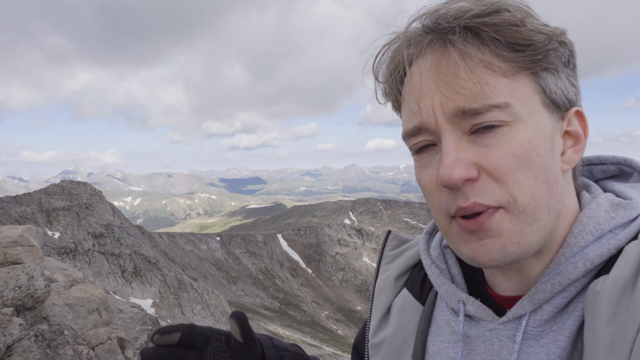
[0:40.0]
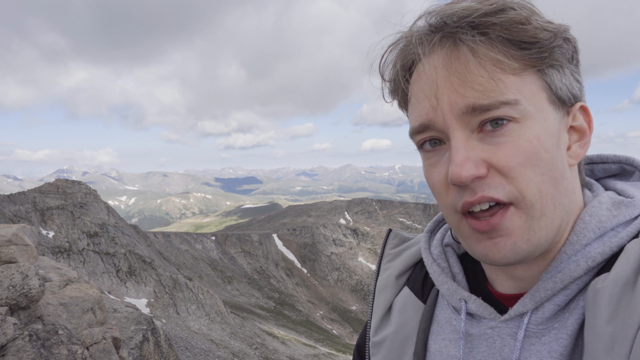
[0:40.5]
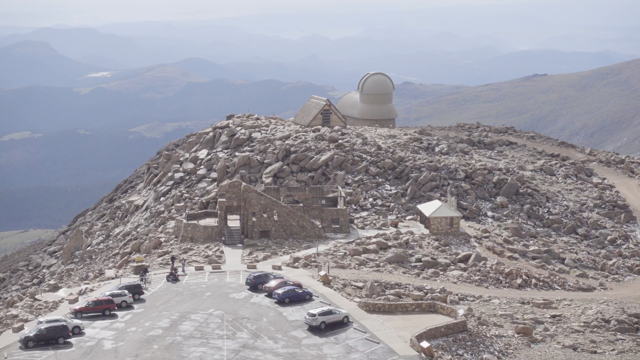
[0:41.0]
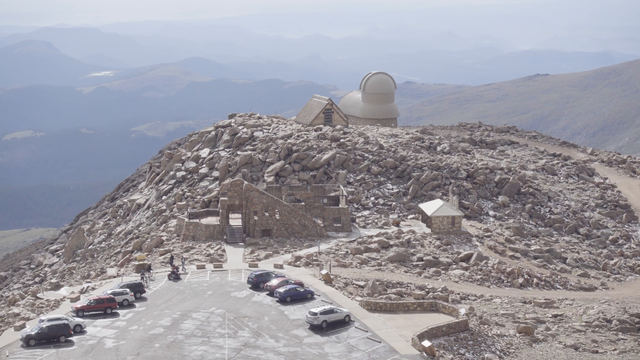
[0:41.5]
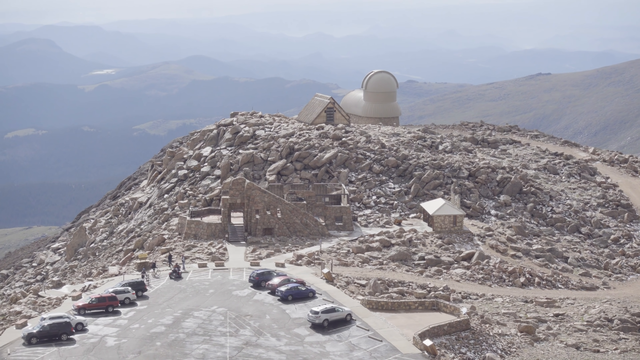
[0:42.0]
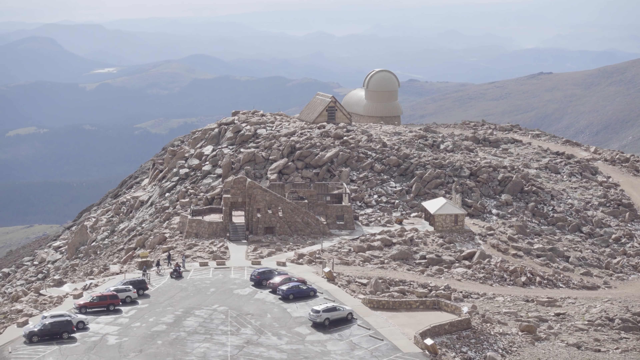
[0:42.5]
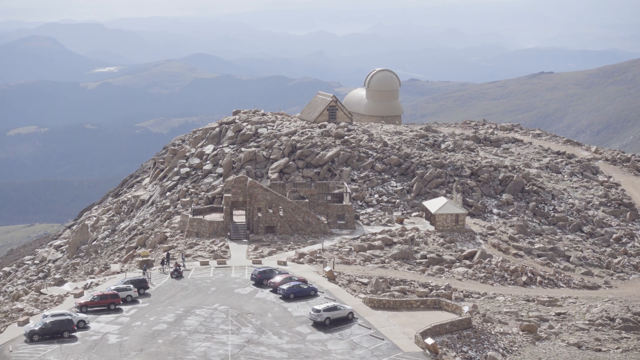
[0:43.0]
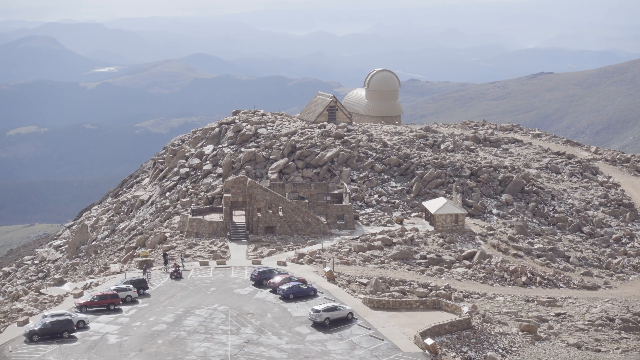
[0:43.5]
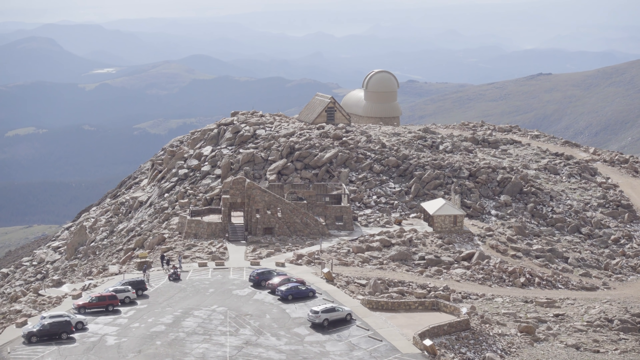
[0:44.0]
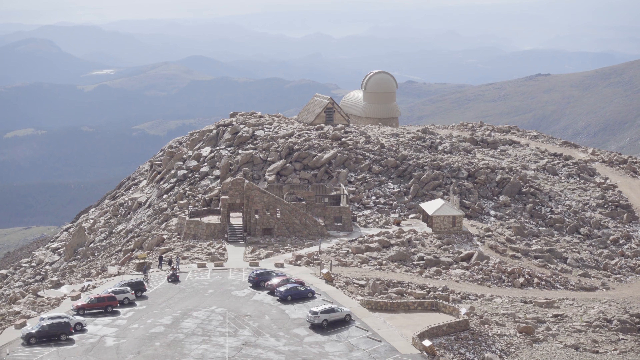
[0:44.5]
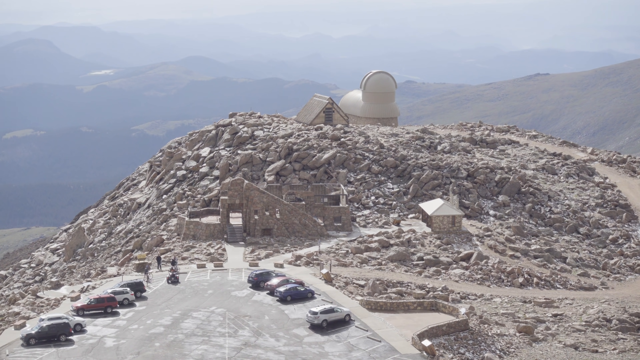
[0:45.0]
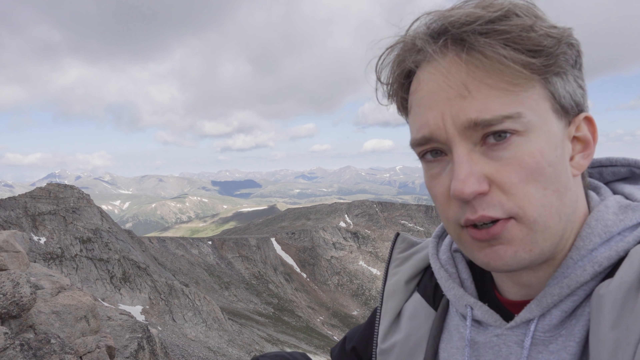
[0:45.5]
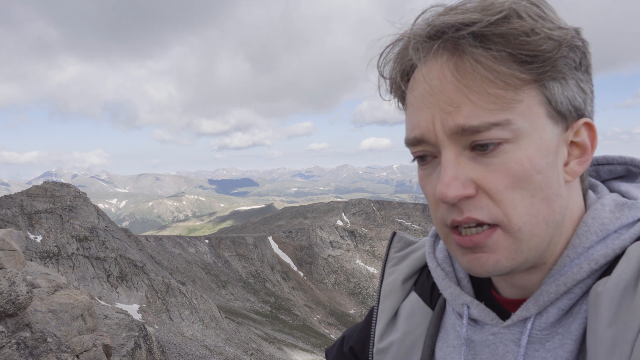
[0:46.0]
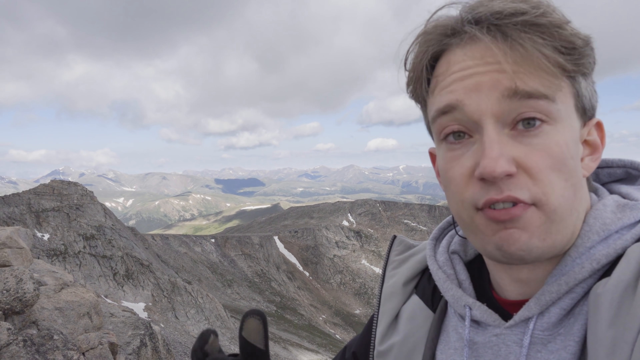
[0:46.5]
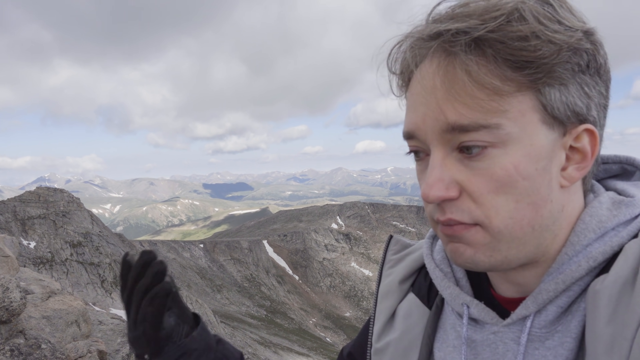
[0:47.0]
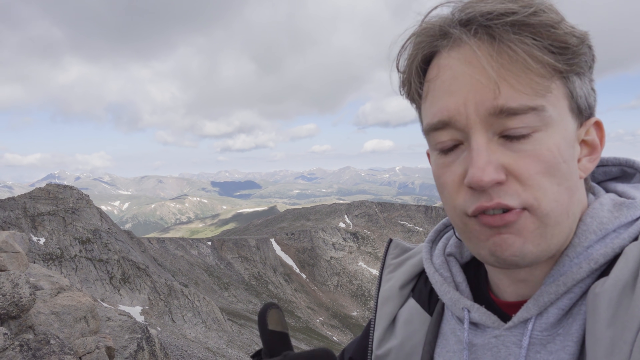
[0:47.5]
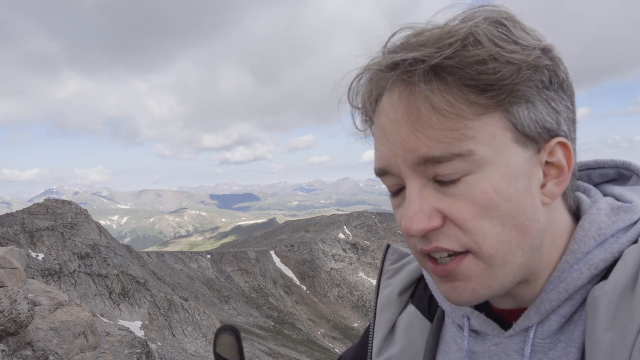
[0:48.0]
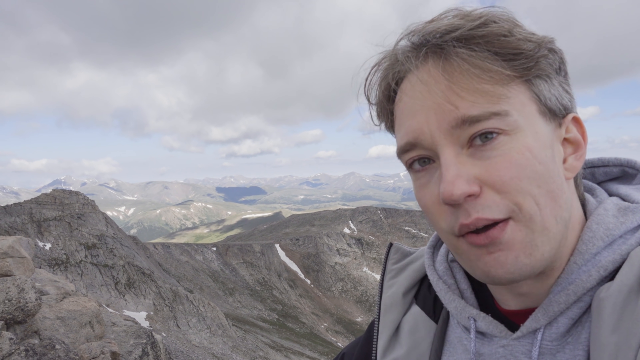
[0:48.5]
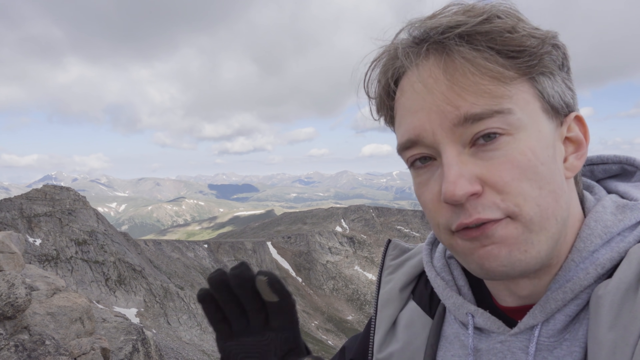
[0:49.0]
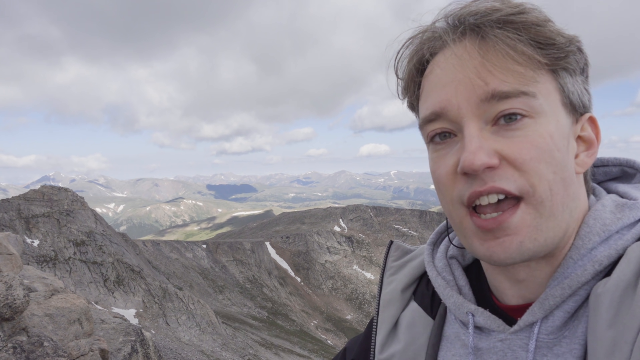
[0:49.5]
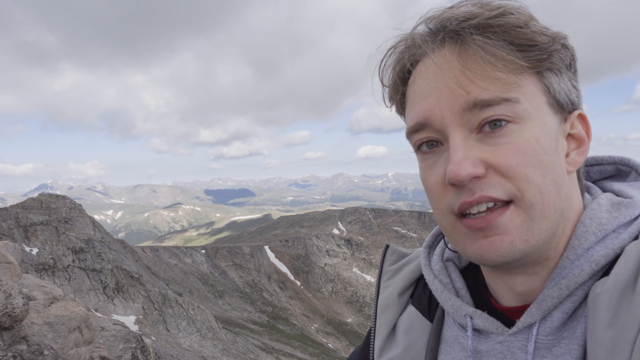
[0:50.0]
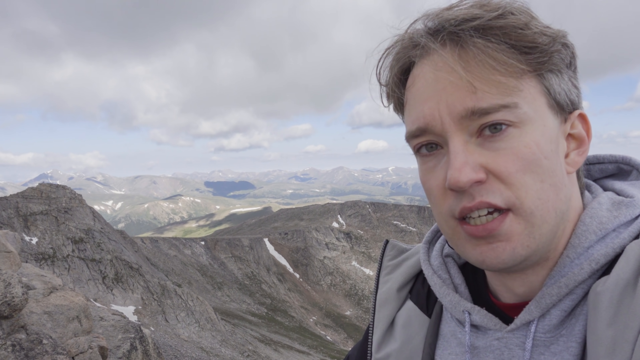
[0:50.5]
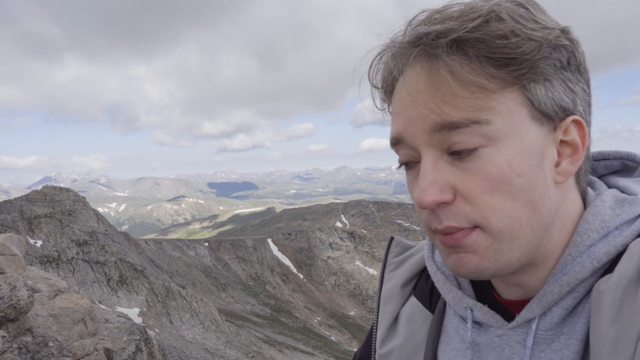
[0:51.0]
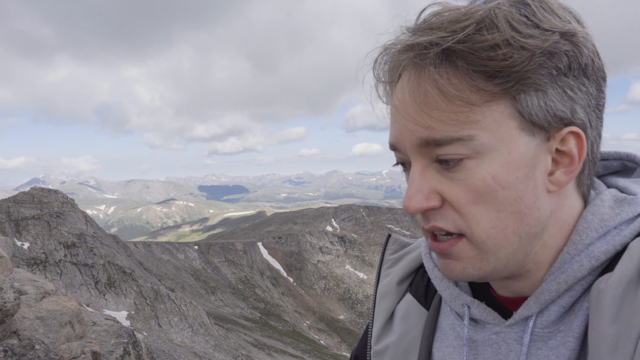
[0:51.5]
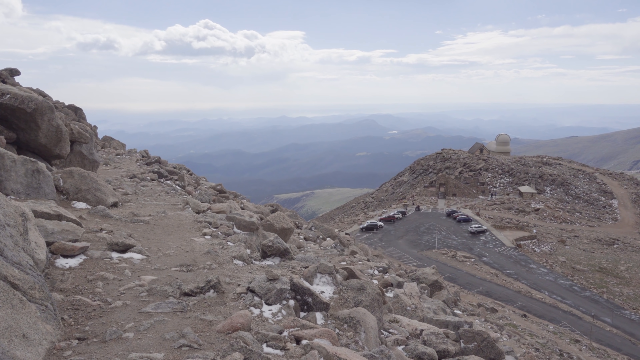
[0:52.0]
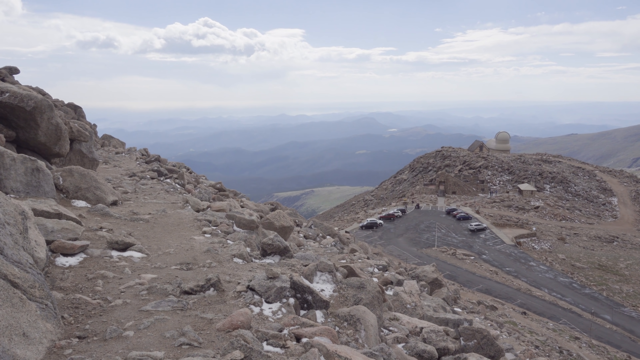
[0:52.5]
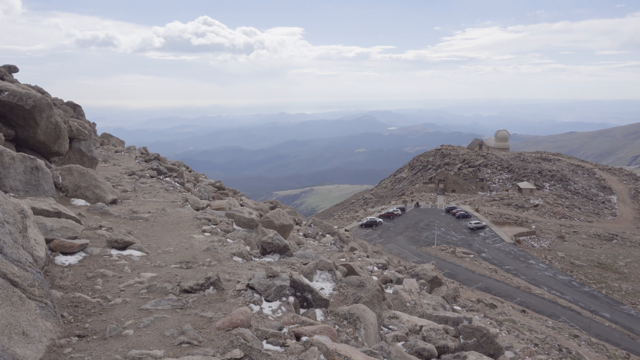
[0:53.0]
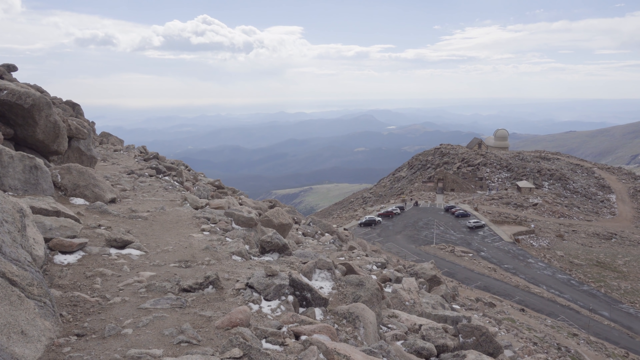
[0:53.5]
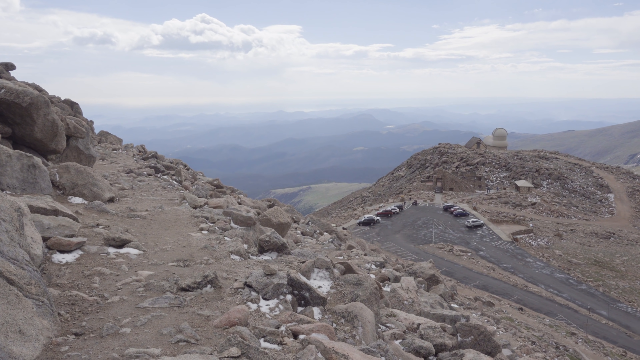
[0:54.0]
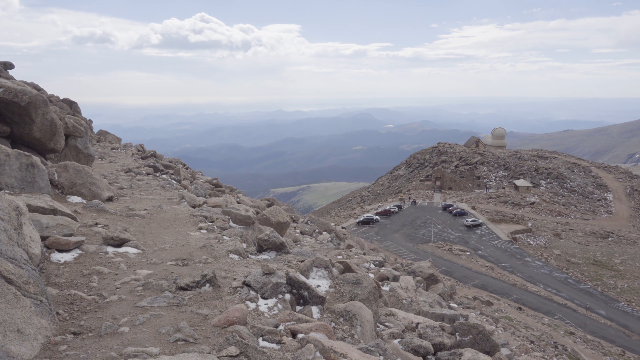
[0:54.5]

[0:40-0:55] The man is still talking to the camera, apparently explaining something serious. The shot cuts to numerous cars parked in a parking lot near the mountain area, with multiple people standing and walking around the lot. Across the parking lot there appears to be the foundation of an older building with a staircase leading into it. To the right of that is what looks like some type of bathroom. In the back area there is a large white building with a rounded top, and to its left is another building that looks like some type of house. Among these buildings are many rocks piled on top of each other, and to the right of those rocks is a road where people can walk to reach the other buildings.